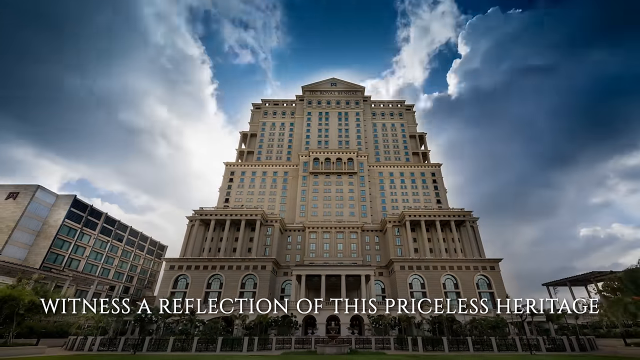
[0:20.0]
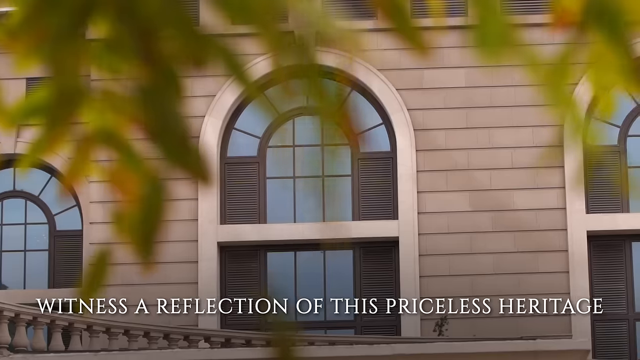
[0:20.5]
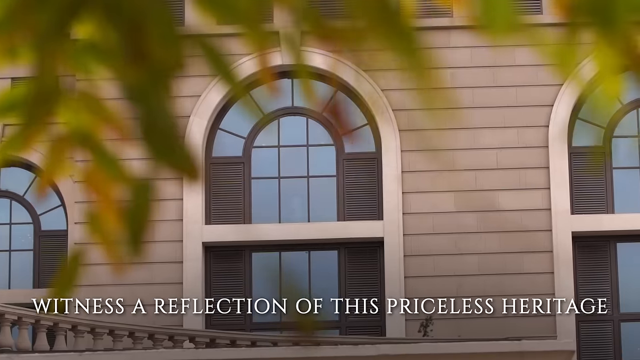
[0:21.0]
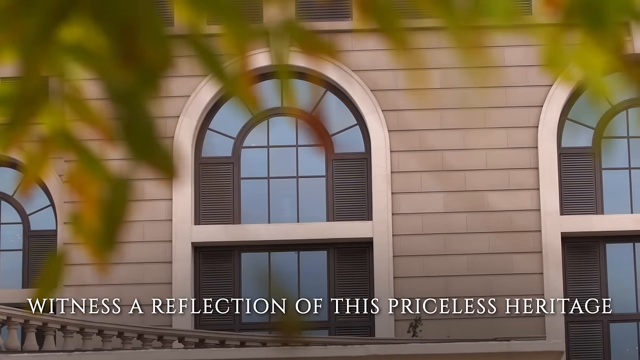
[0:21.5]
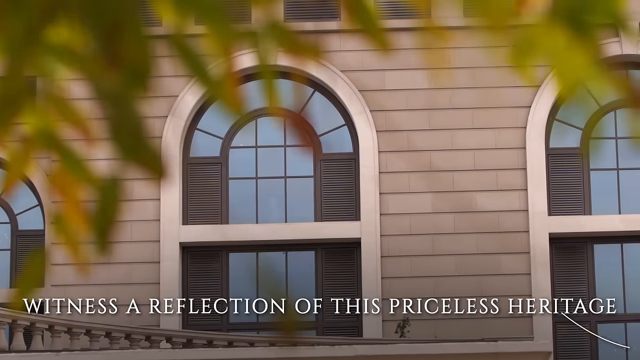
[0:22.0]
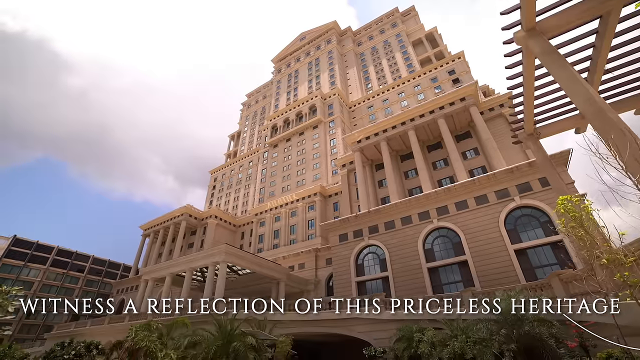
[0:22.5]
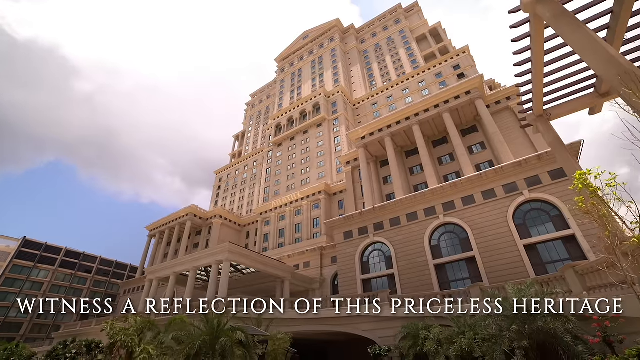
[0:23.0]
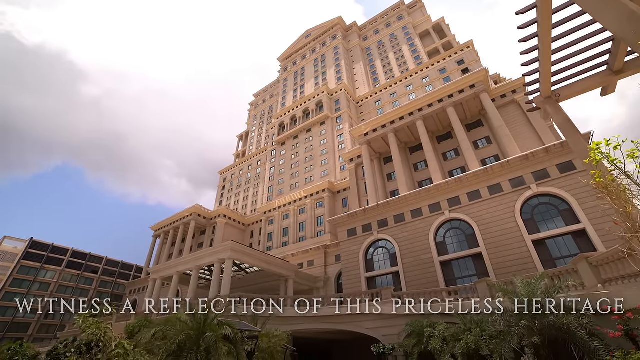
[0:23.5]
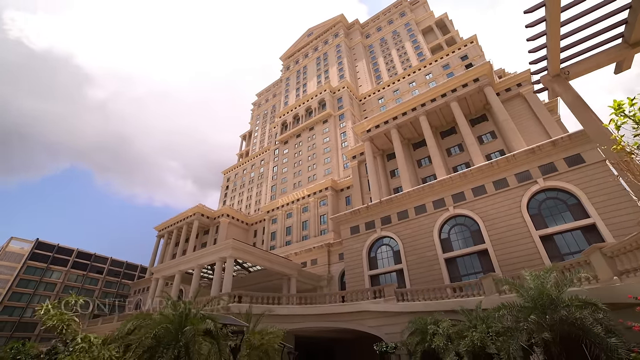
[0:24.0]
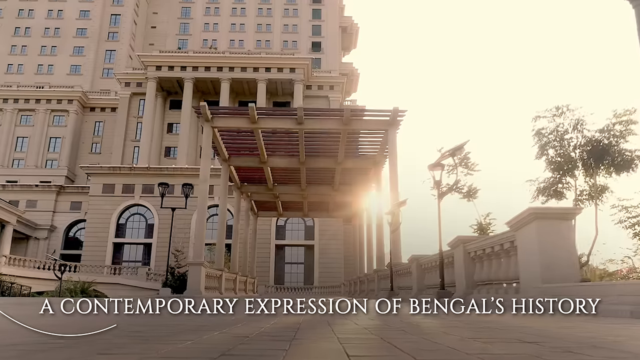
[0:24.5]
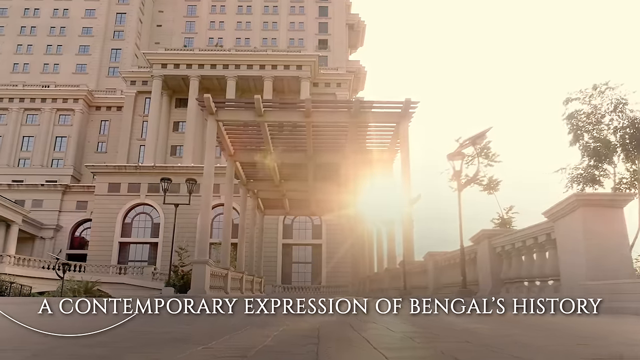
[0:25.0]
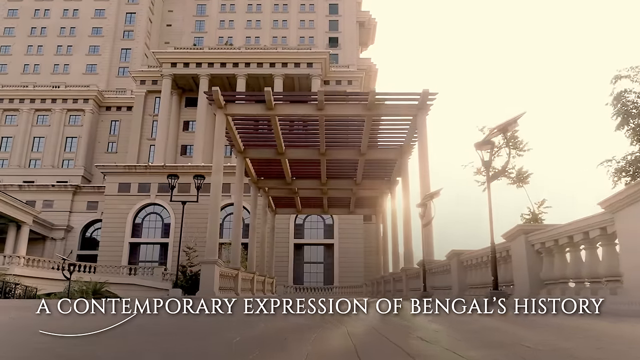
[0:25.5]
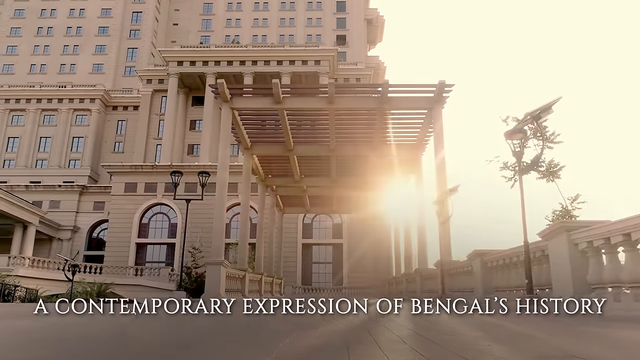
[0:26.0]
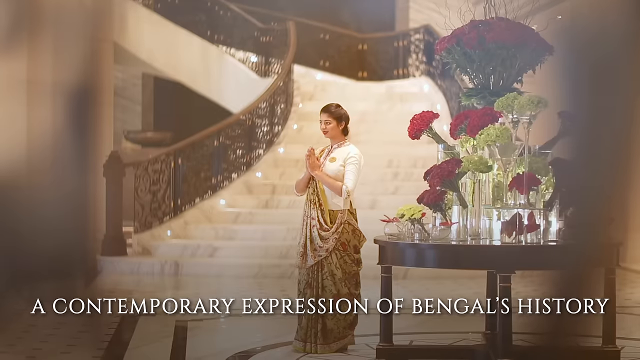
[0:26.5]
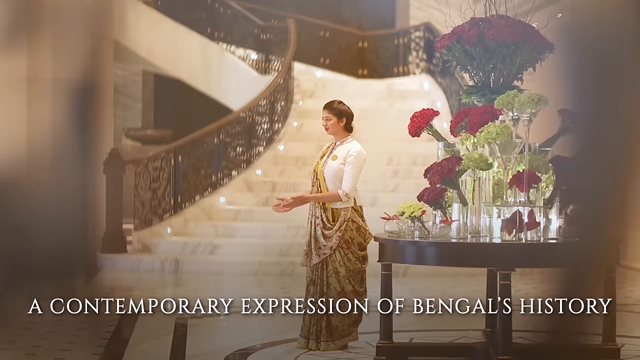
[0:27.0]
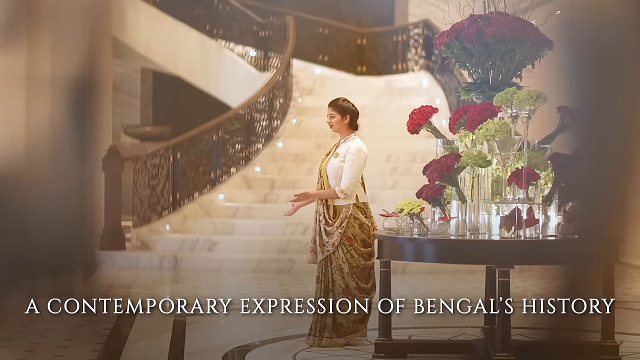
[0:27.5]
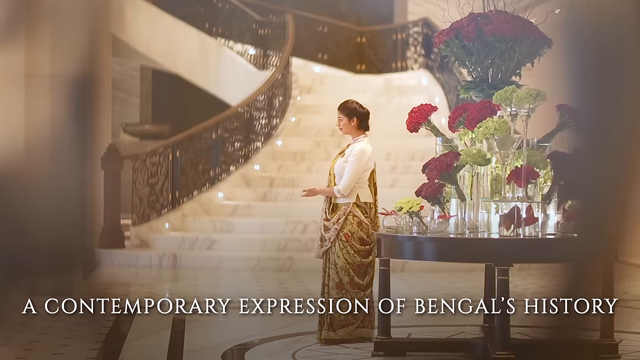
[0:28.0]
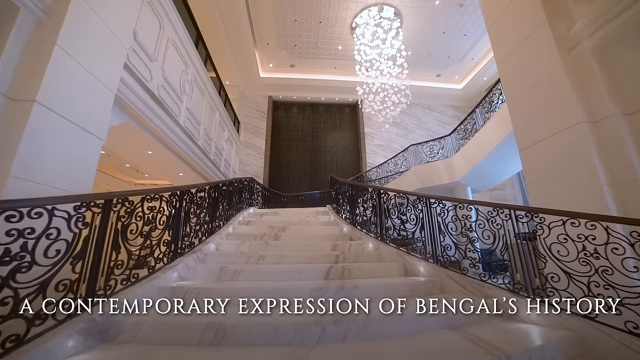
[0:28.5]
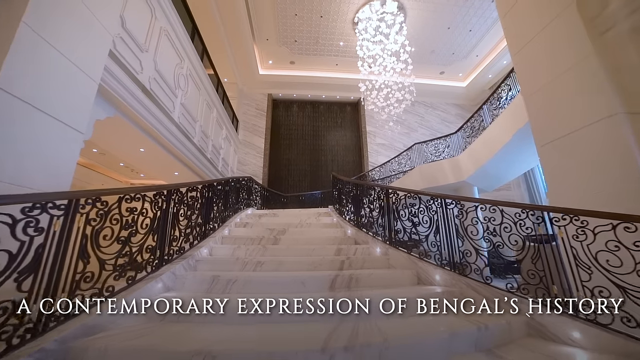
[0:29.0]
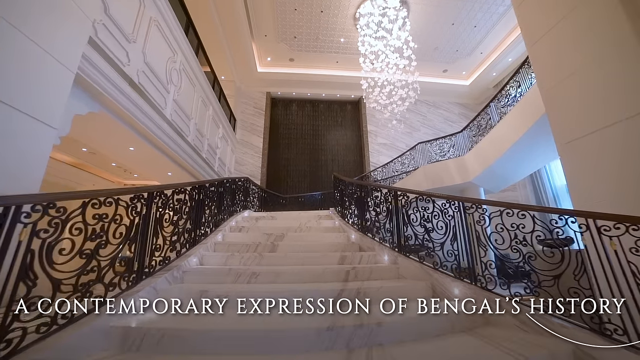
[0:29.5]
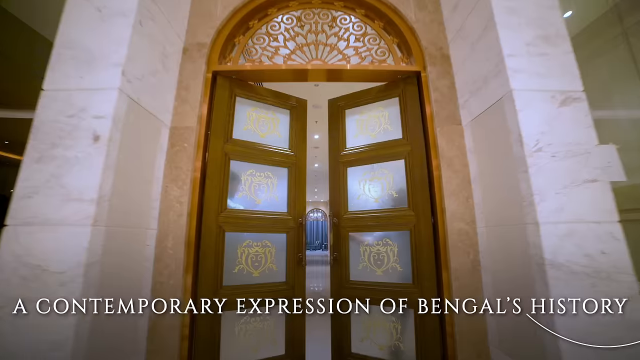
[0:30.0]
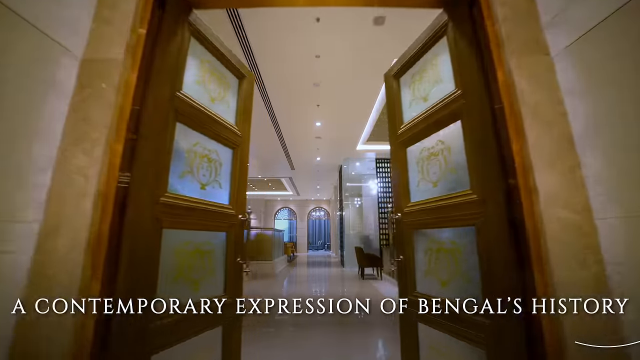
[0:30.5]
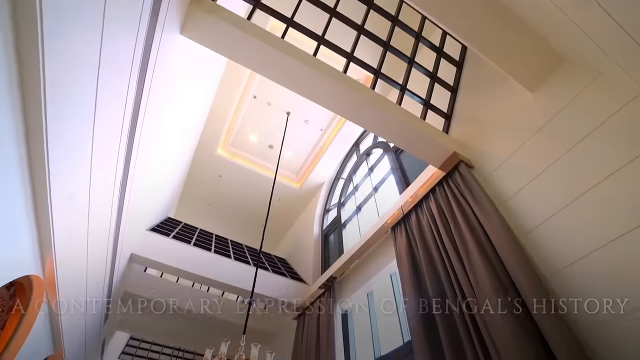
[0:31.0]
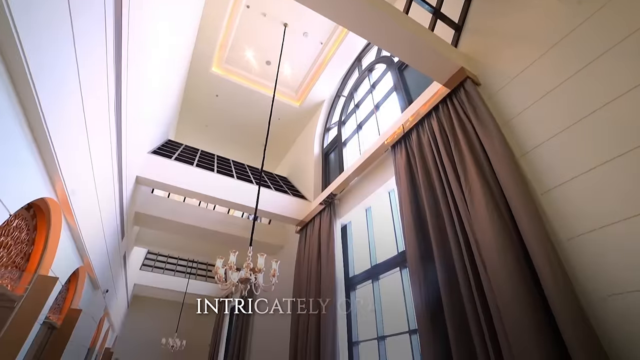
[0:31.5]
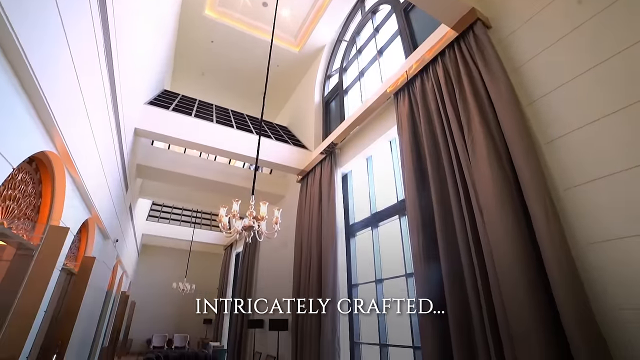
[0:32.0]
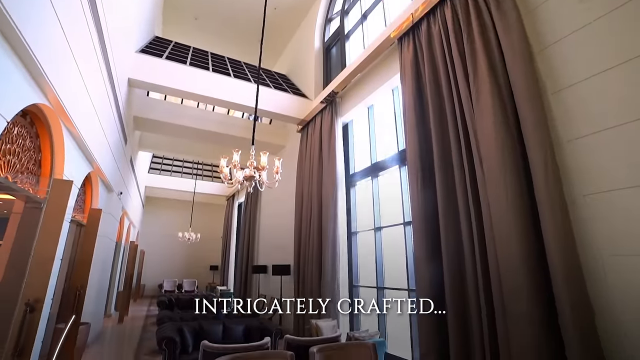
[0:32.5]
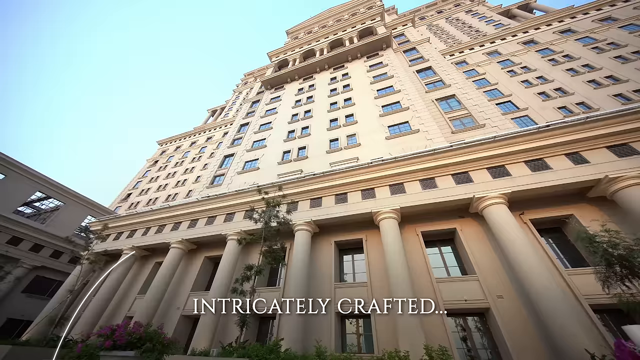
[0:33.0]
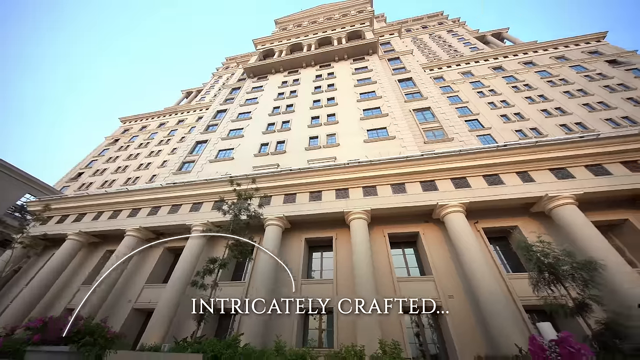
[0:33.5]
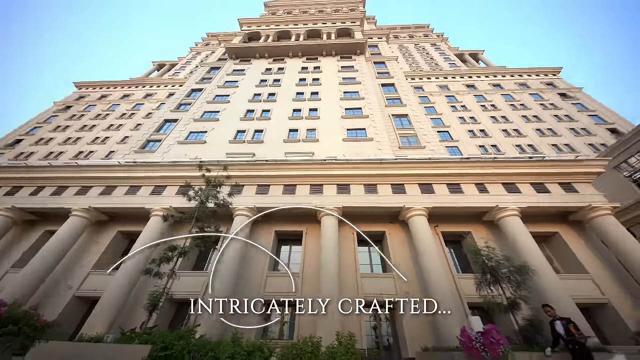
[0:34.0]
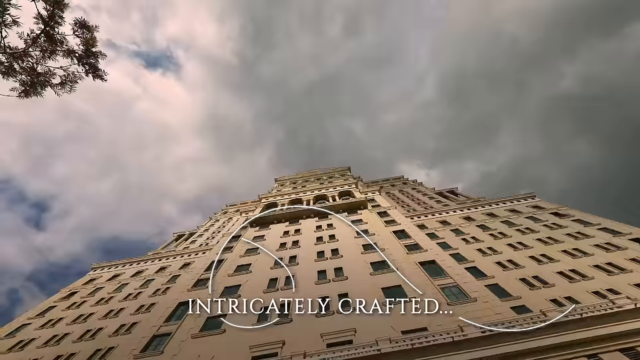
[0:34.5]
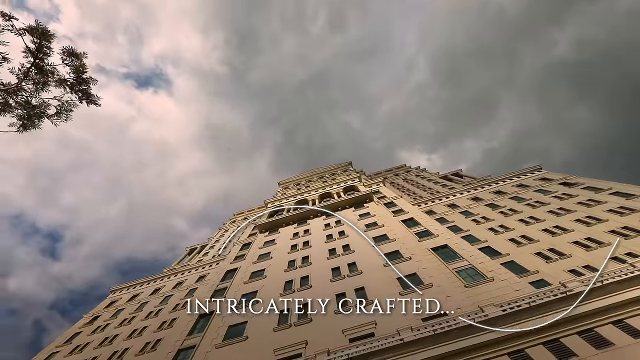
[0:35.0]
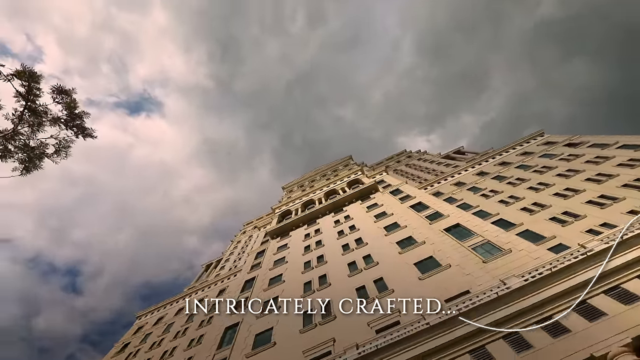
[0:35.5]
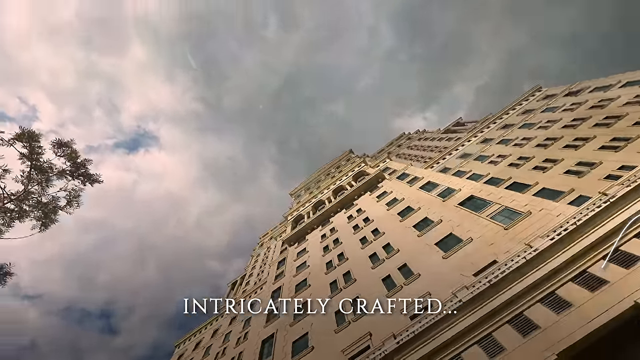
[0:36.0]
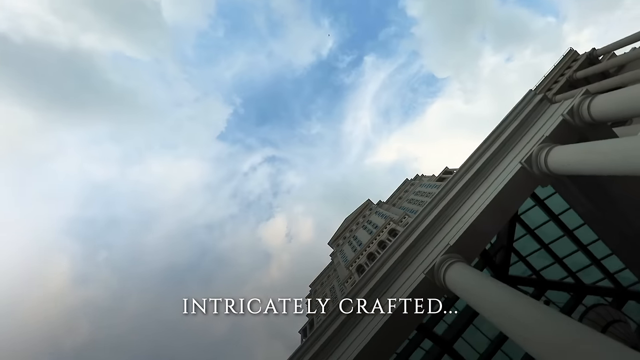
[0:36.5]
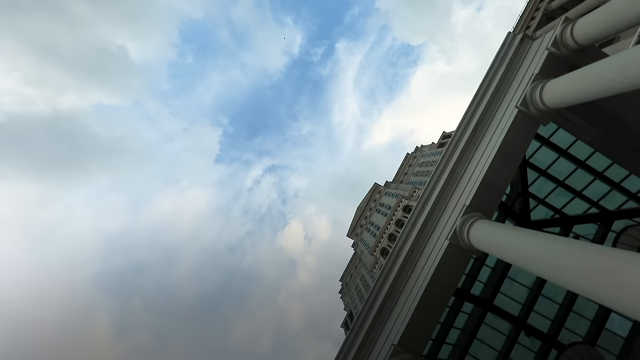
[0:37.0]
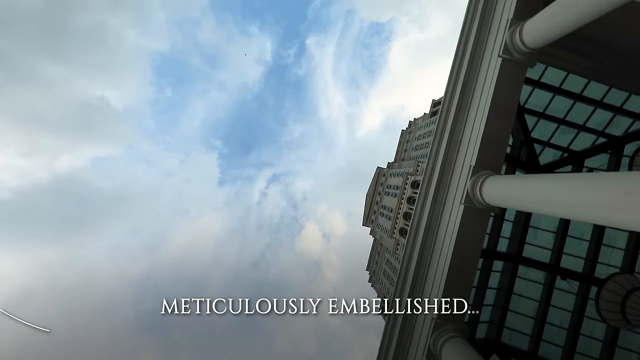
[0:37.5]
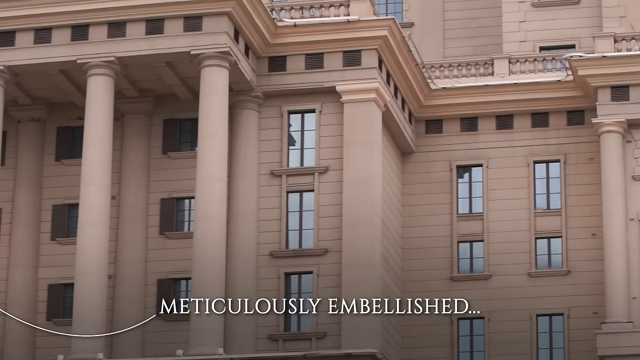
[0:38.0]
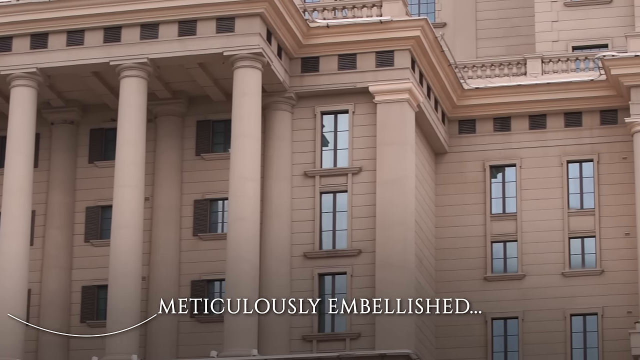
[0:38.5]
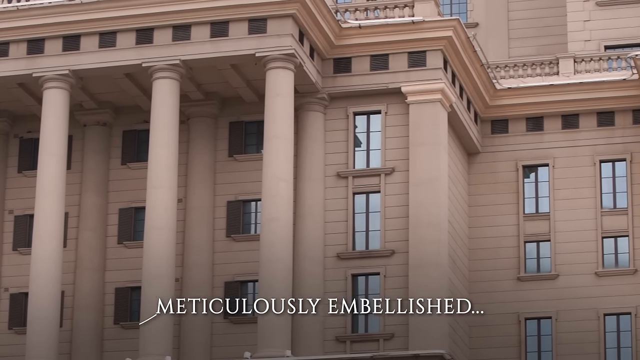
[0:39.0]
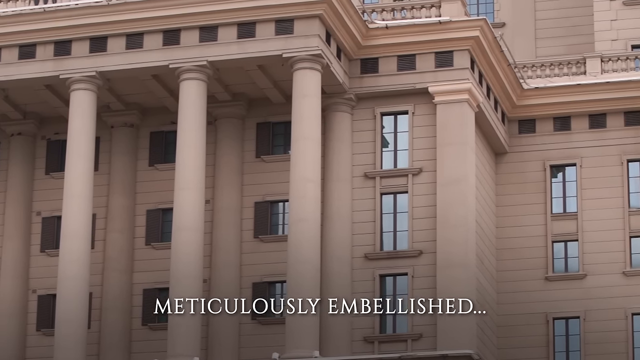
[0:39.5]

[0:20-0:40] A zoom out reveals a tall multi-story building with white text reading "witness a reflection of this priceless heritage." It cuts to a zoom in on the building's arced windows, with the text still at the bottom, and then to a ground view looking up at the building. New text appears reading "a contemporary expression of Bengali's history." A person with the camera walks up to the building, and a view through one of the windows shows a greeter inside bowing toward someone coming in, with a round table behind them holding multiple flowers in clear cylindrical vases. From the camera's point of view, the cameraman climbs marble stairs. In a new shot, double doors with glass panes open in front of the person, followed by a view of an interior hallway with tall windows and curtains. The video then again shows a side view of the building with white text reading "intricately crafted," and keeps looking at the building from different angles at different times of day, with the camera spinning.